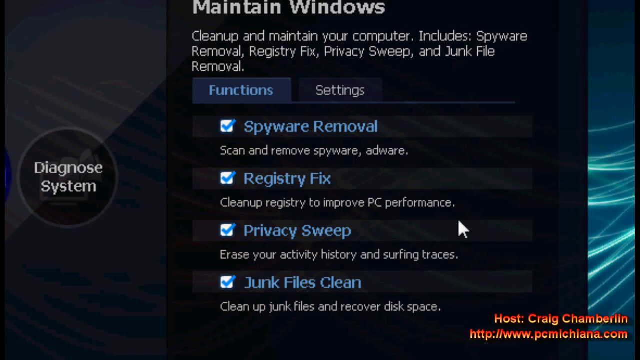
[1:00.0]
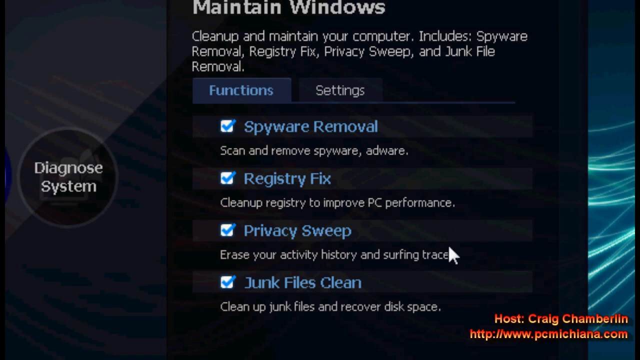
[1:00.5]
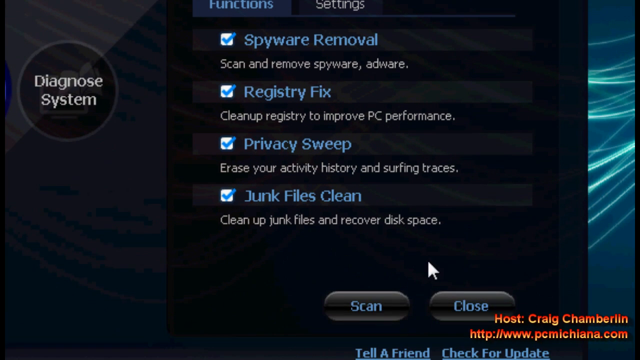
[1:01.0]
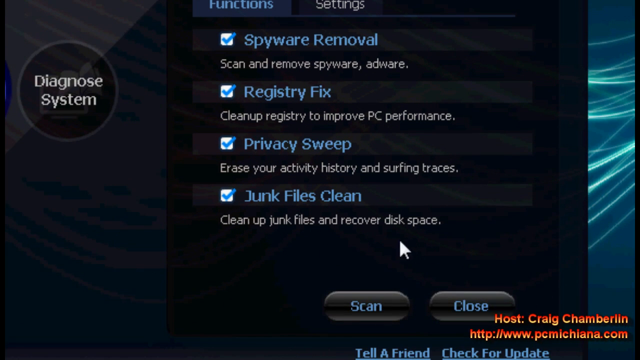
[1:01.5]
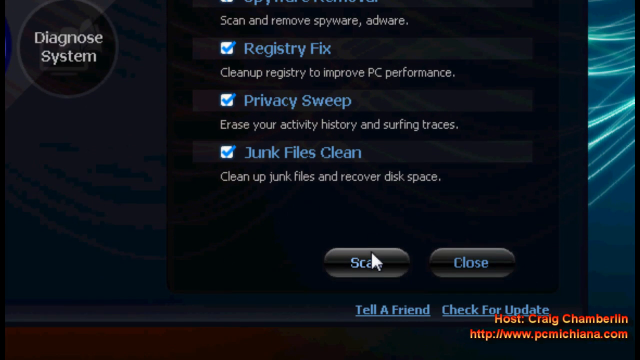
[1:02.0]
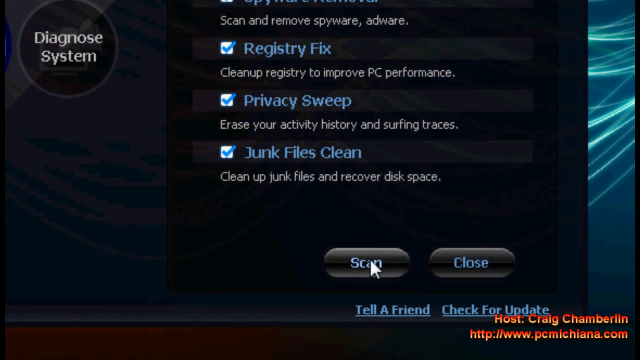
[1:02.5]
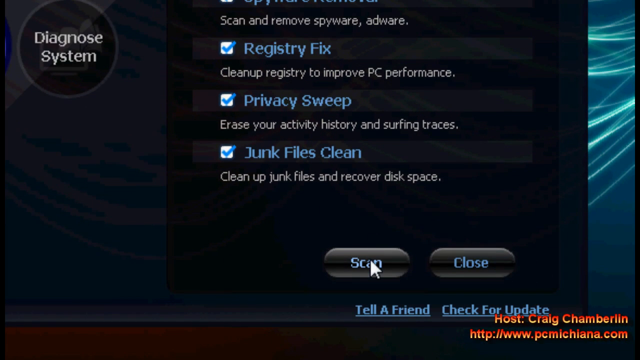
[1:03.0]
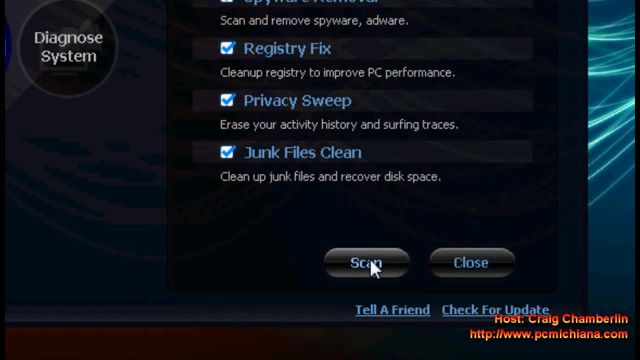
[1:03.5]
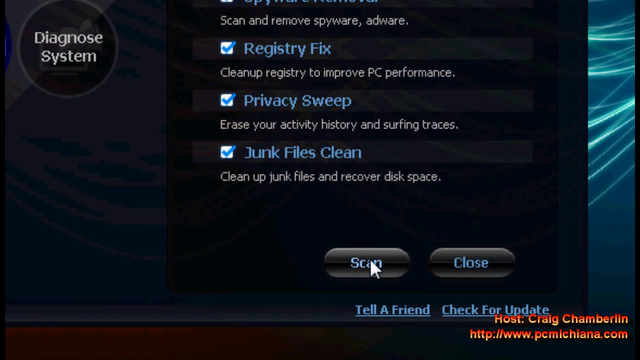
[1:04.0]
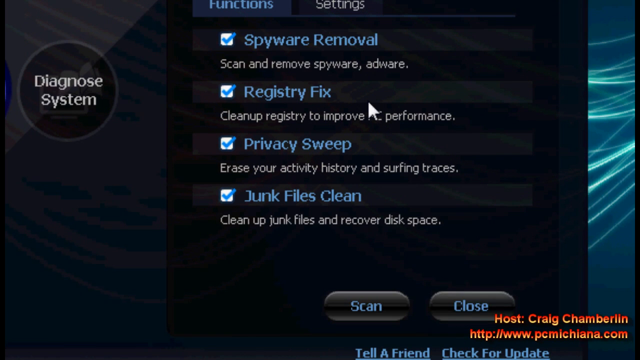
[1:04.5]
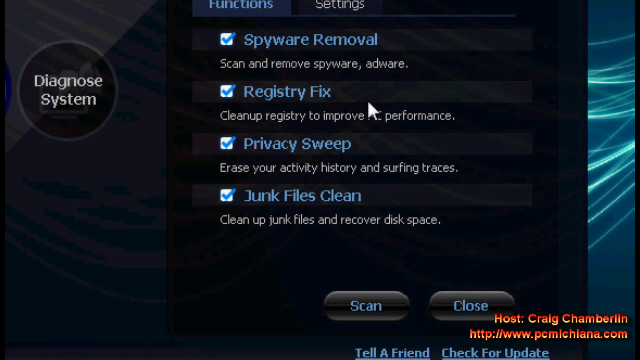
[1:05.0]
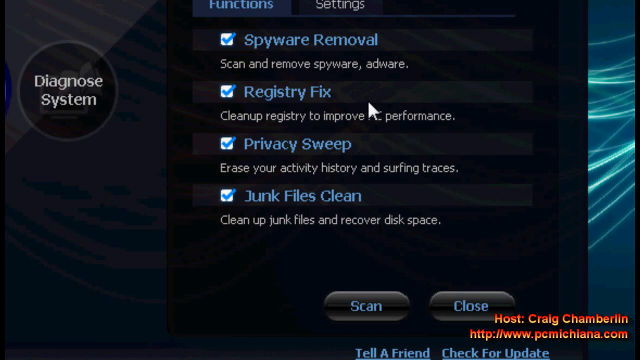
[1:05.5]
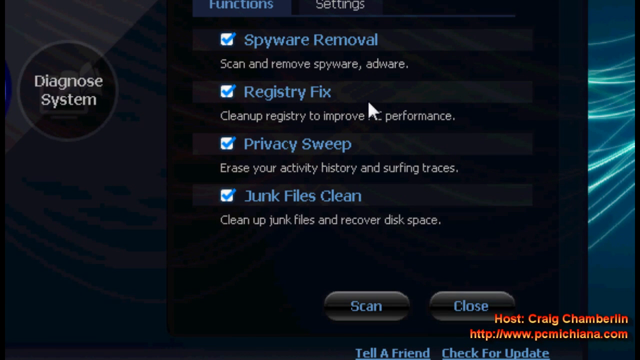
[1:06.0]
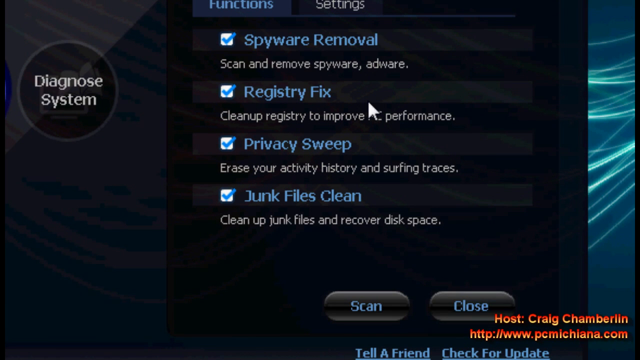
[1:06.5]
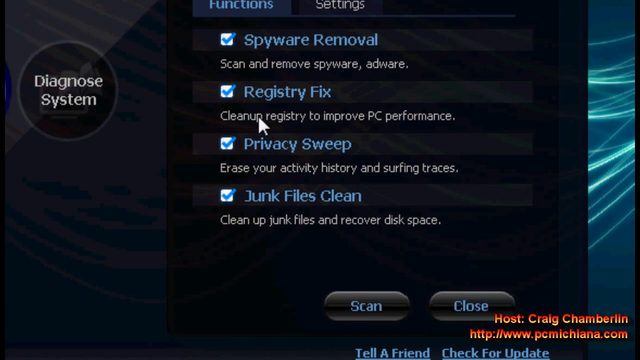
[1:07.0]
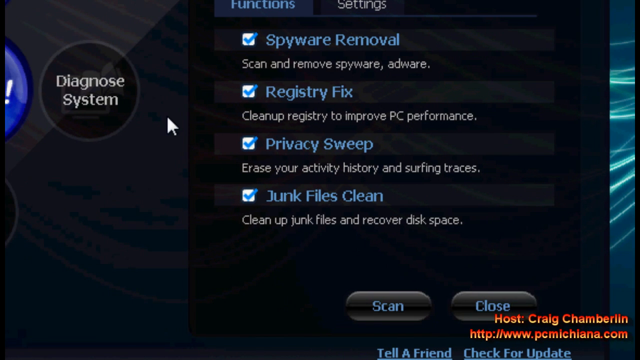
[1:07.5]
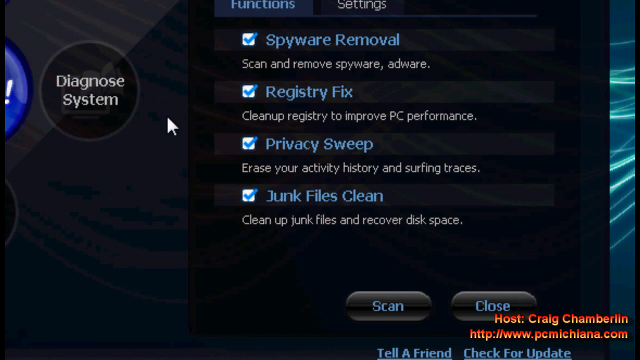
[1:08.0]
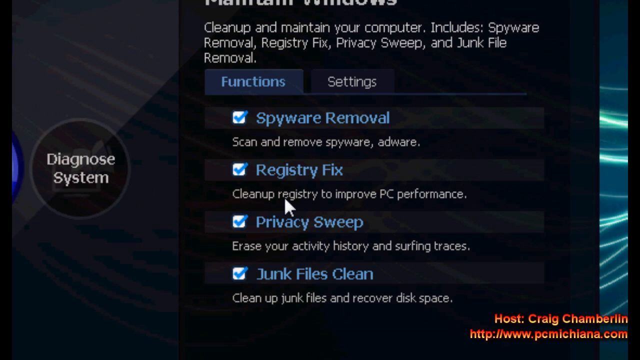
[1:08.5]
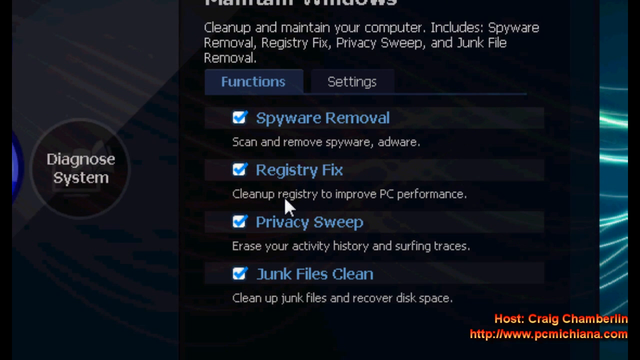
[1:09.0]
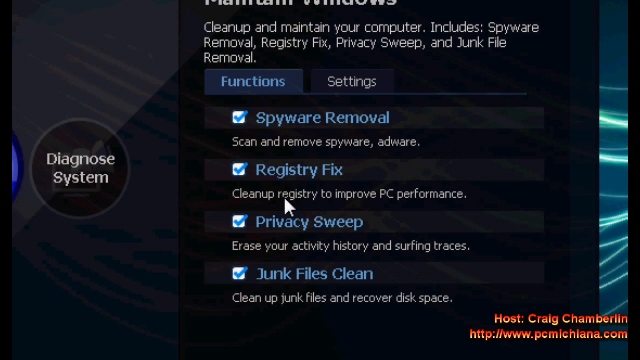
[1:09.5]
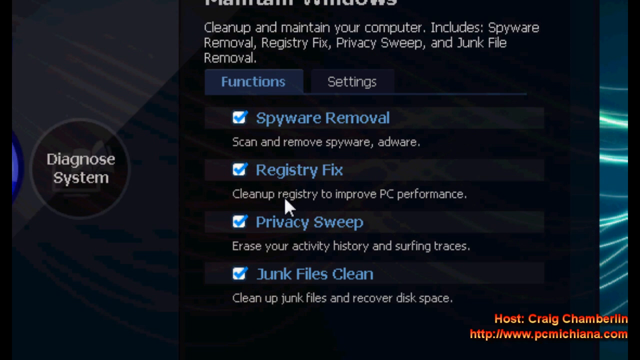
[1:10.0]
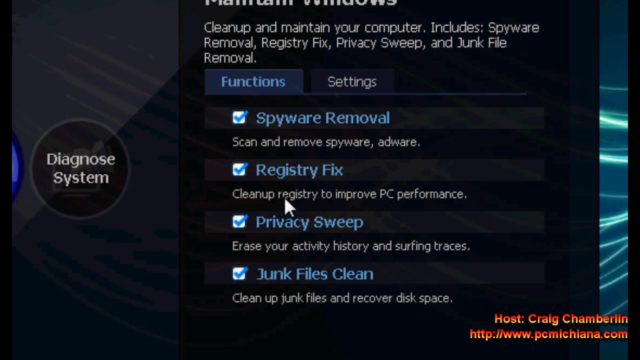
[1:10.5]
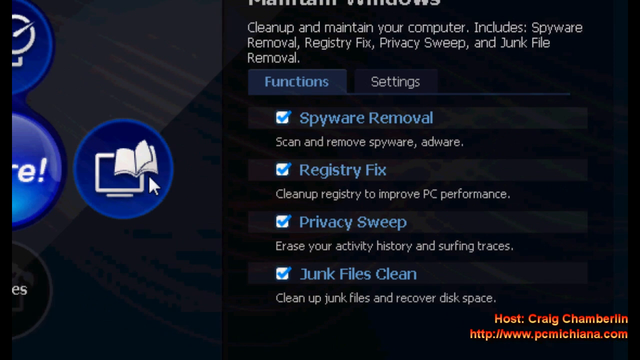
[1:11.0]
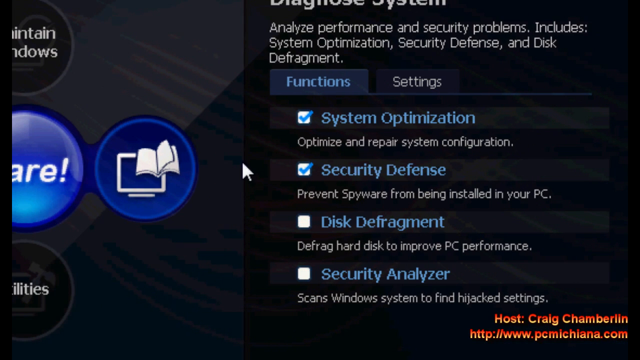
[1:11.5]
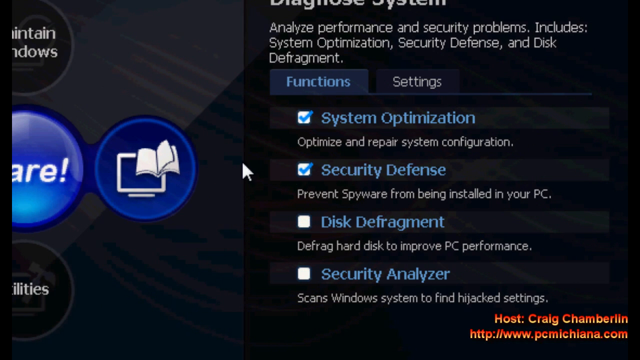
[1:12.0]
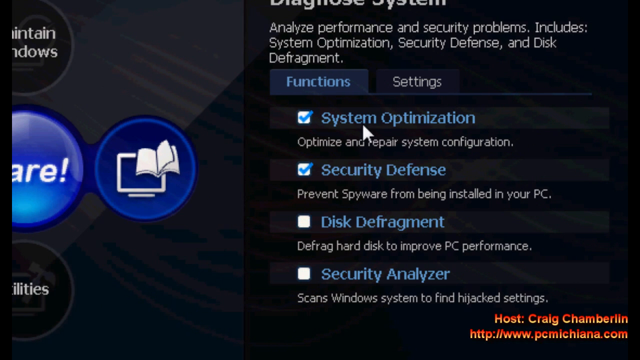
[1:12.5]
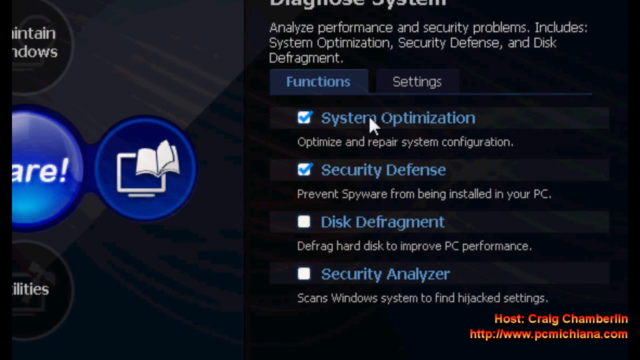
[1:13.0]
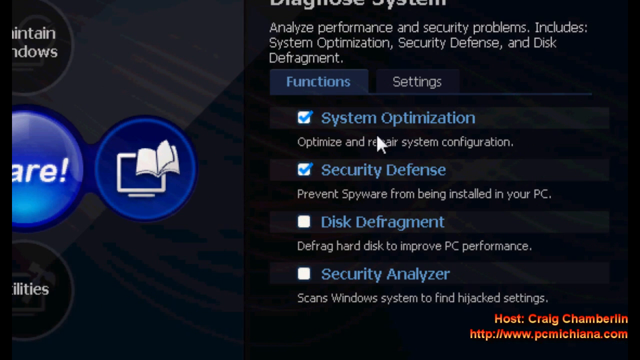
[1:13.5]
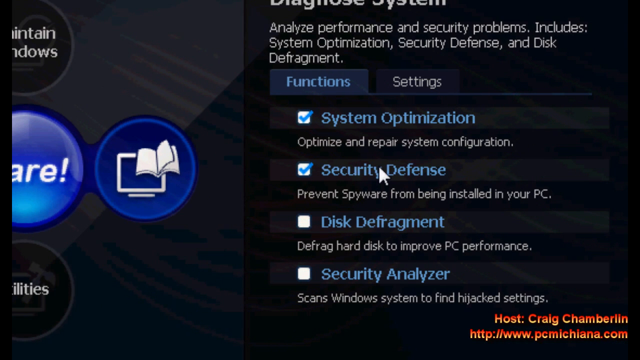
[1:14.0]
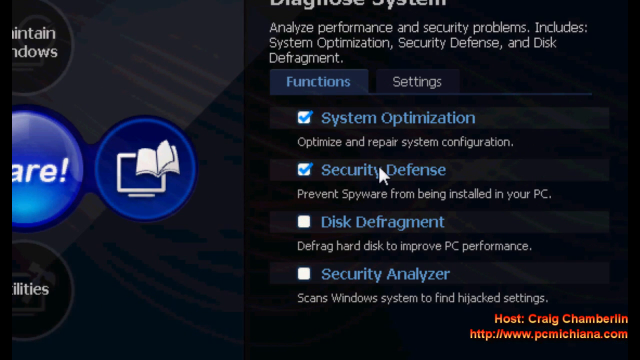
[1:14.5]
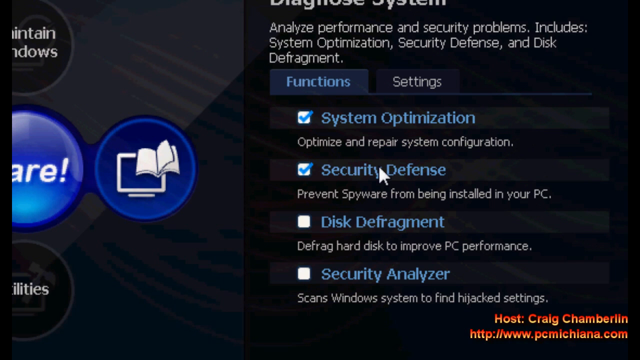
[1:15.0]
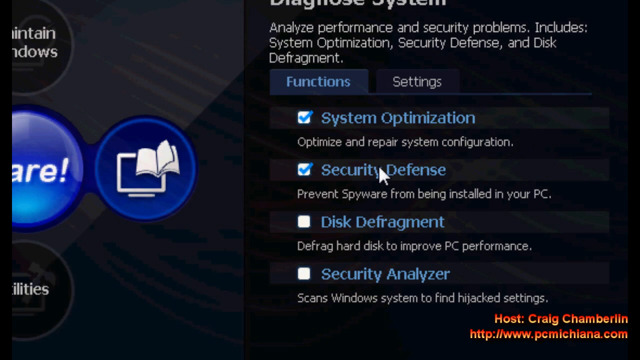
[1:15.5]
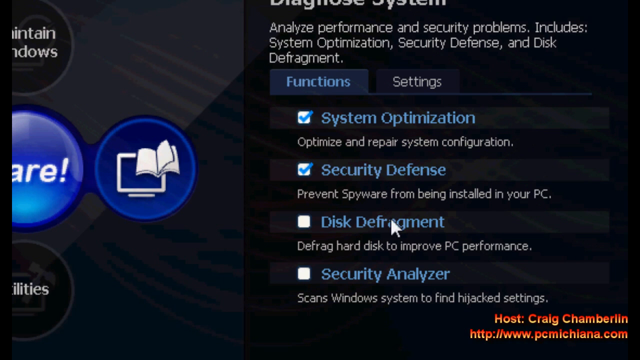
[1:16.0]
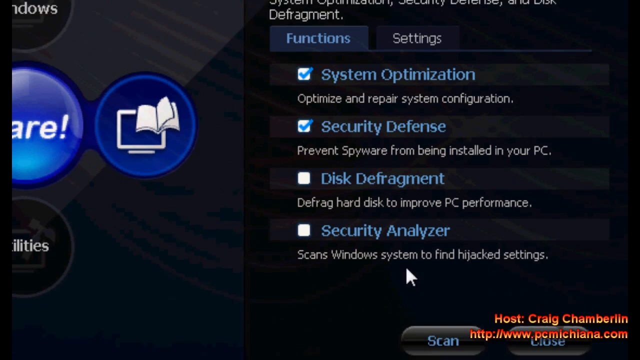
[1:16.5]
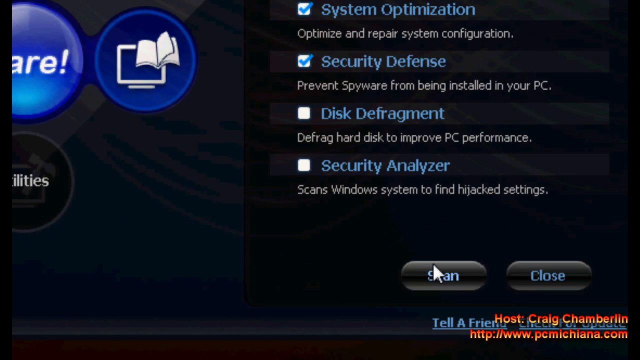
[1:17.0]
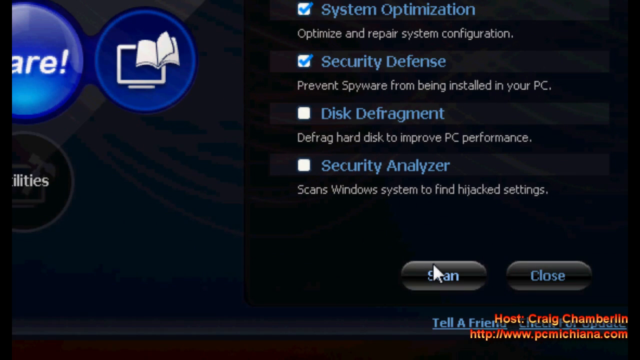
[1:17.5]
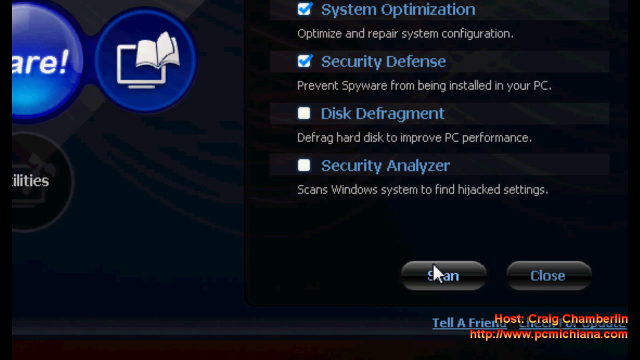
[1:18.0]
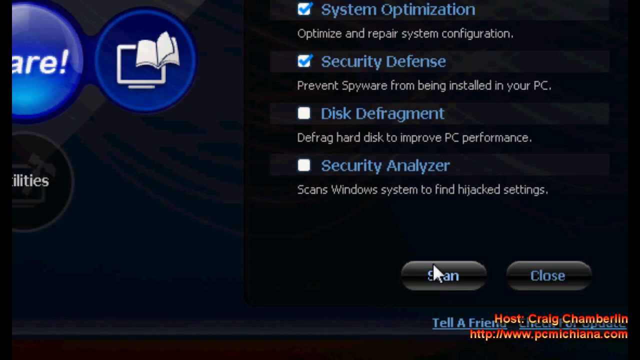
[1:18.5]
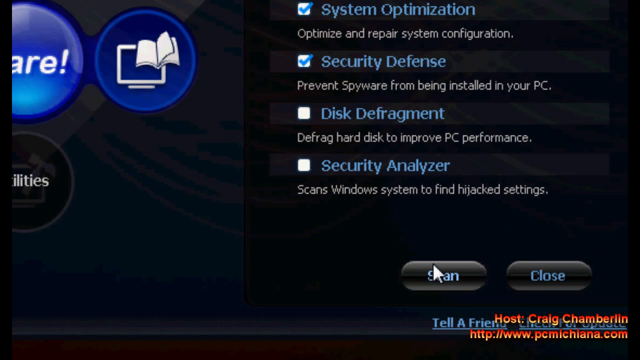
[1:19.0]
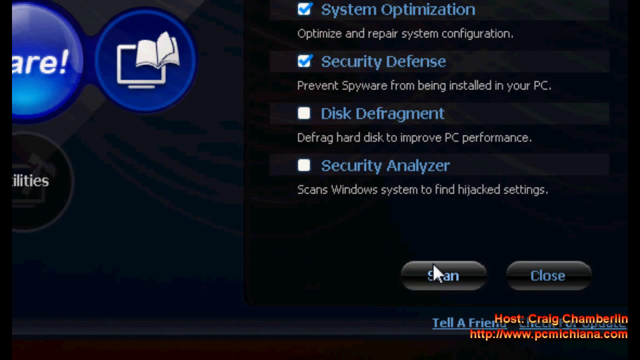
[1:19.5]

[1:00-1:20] The webpage now shows a spyware update and a diagnosis system. Below is an image with a function button and the settings, with four checked boxes: scan and remove spyware, clean up registry to improve PC performance, clean up junk files and recover disk drive, and a privacy sweep. Moving down, the cursor clicks the scan button. In the bottom right-hand corner, the video is shown to be hosted by a man named Craig Chamberlain, as he keeps moving the cursor toward the scan button below.